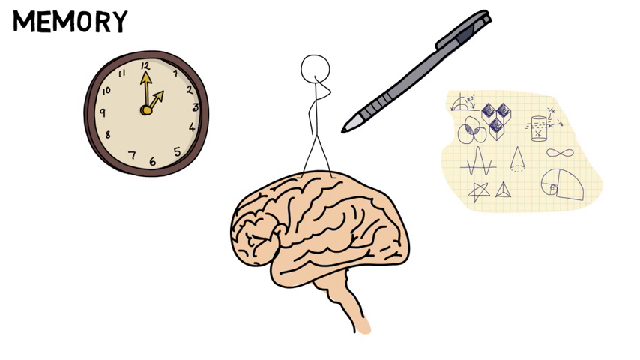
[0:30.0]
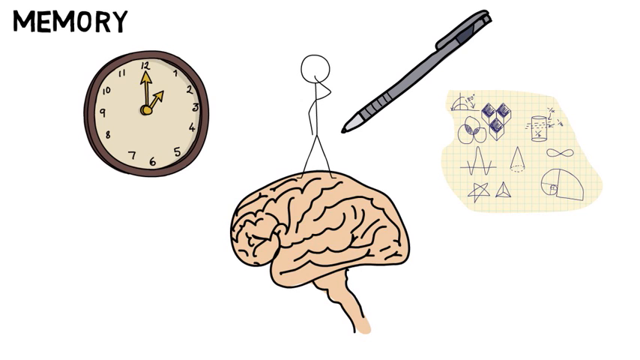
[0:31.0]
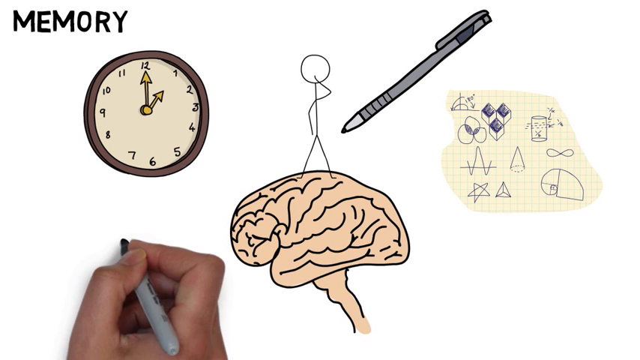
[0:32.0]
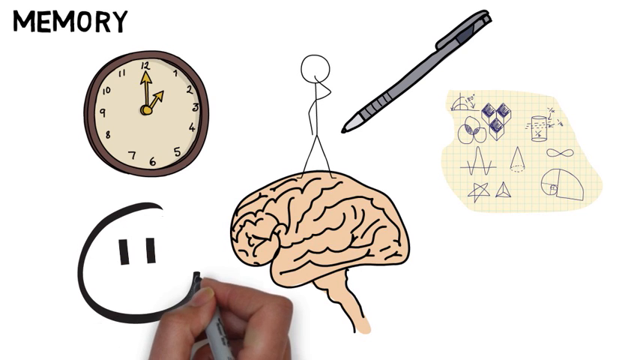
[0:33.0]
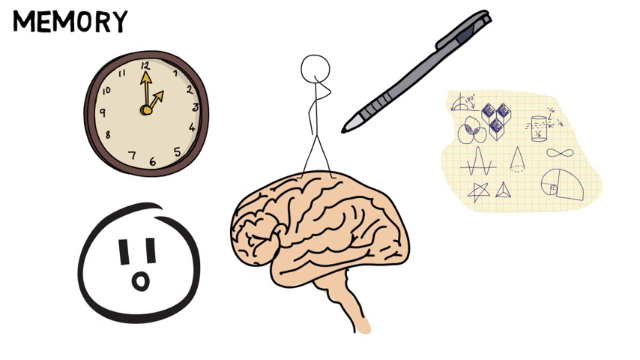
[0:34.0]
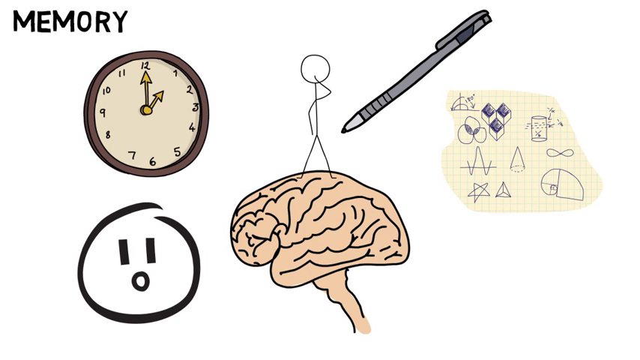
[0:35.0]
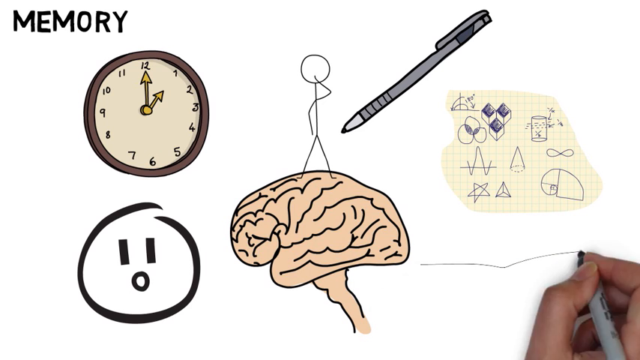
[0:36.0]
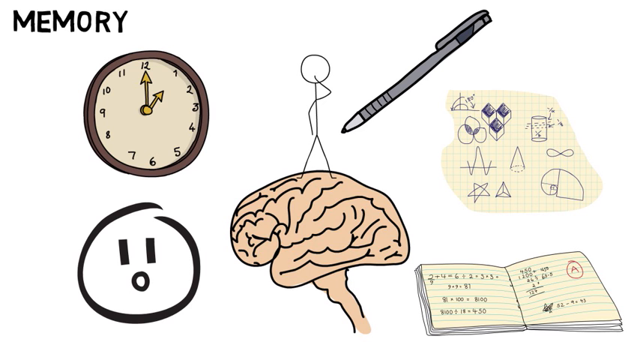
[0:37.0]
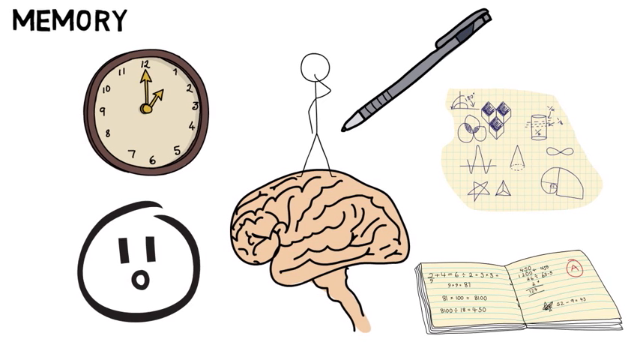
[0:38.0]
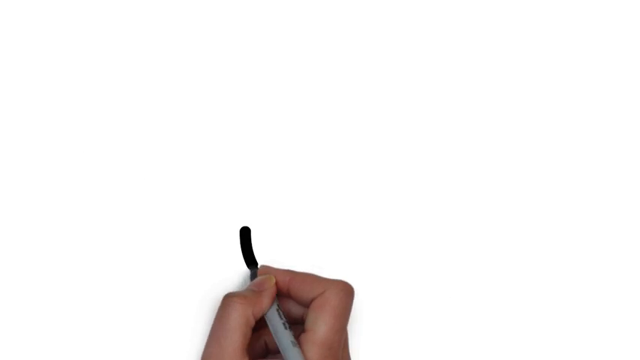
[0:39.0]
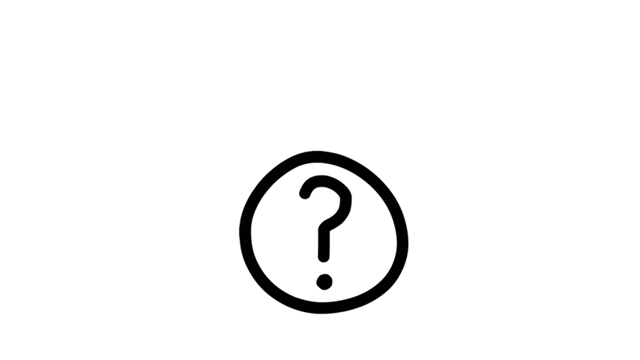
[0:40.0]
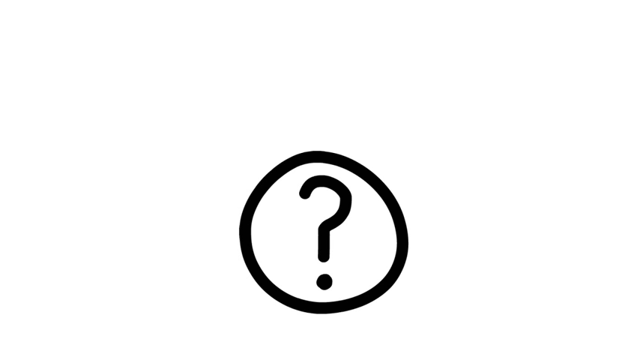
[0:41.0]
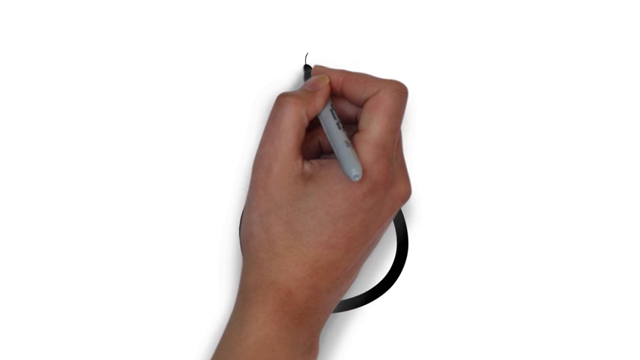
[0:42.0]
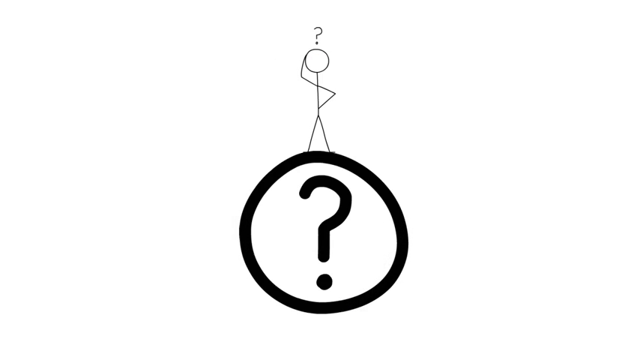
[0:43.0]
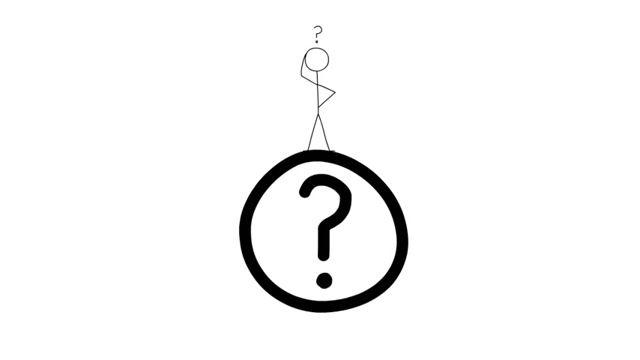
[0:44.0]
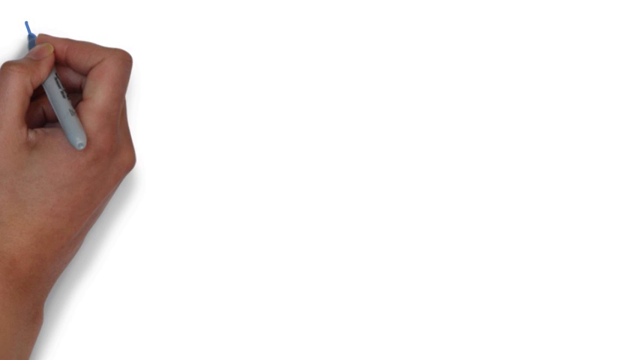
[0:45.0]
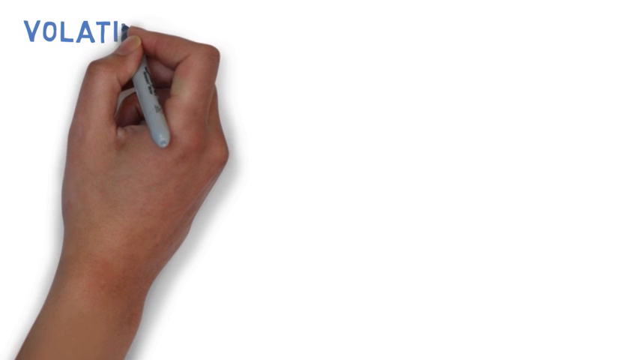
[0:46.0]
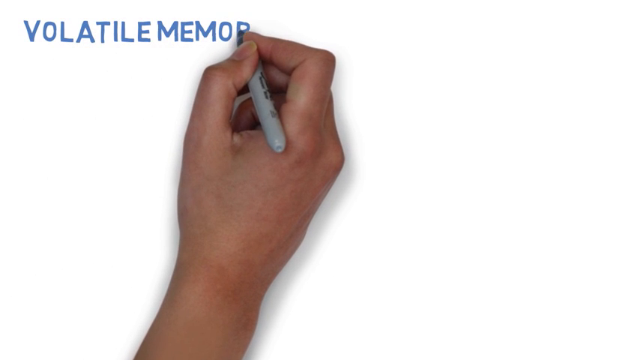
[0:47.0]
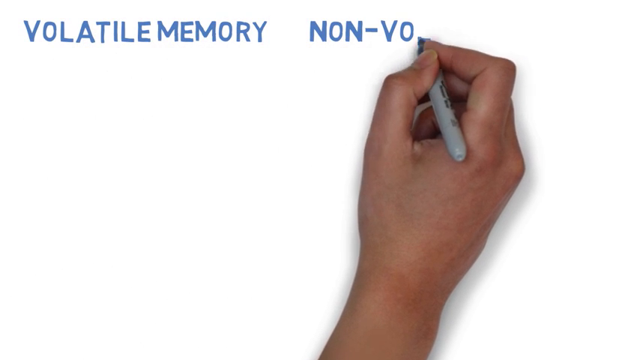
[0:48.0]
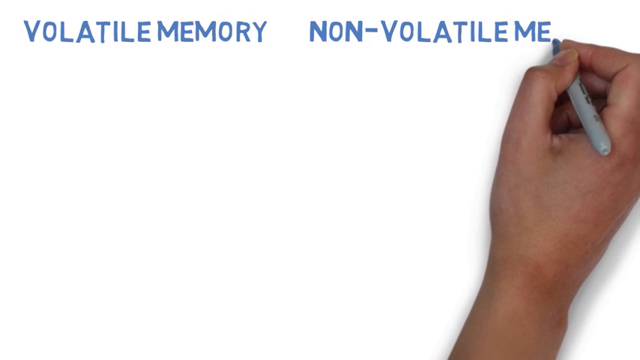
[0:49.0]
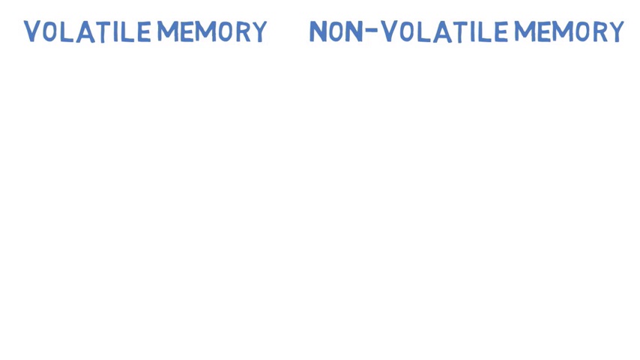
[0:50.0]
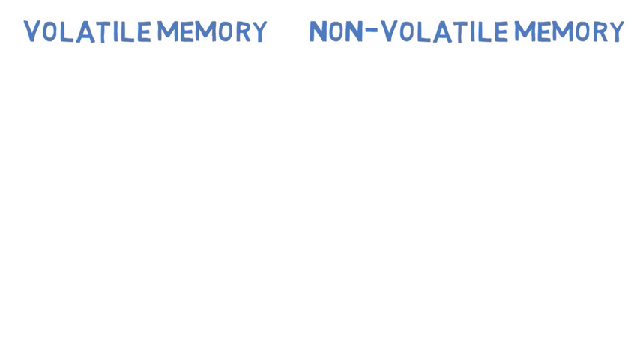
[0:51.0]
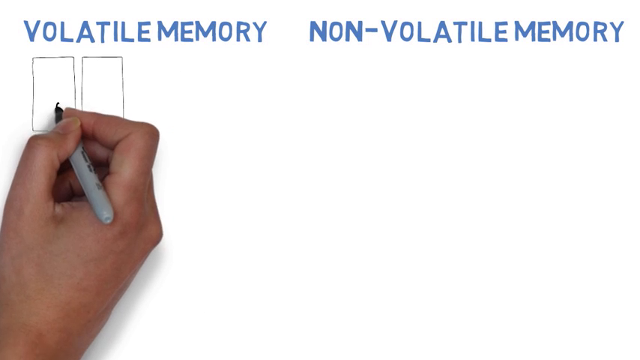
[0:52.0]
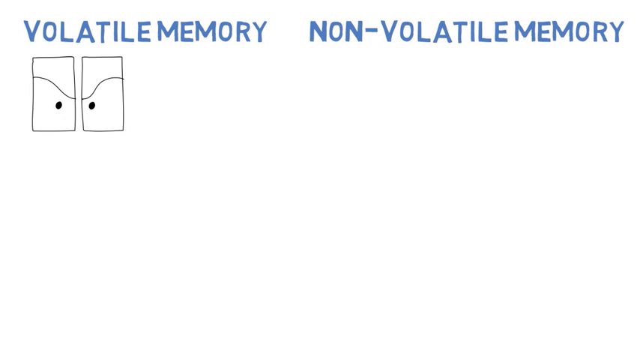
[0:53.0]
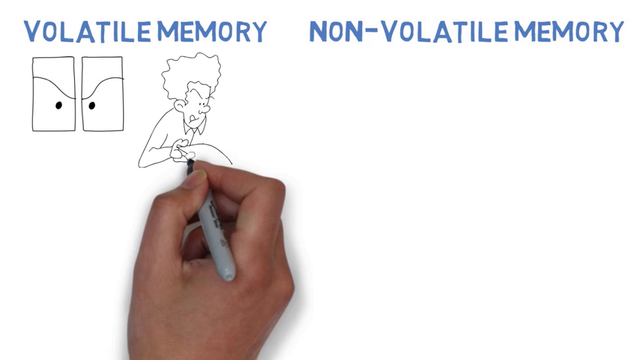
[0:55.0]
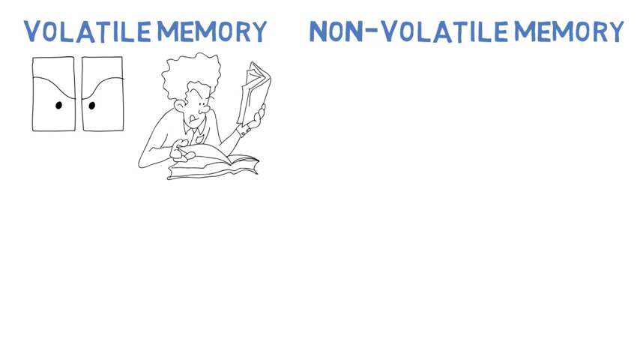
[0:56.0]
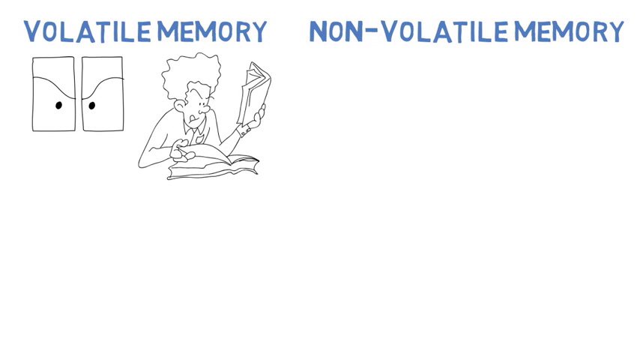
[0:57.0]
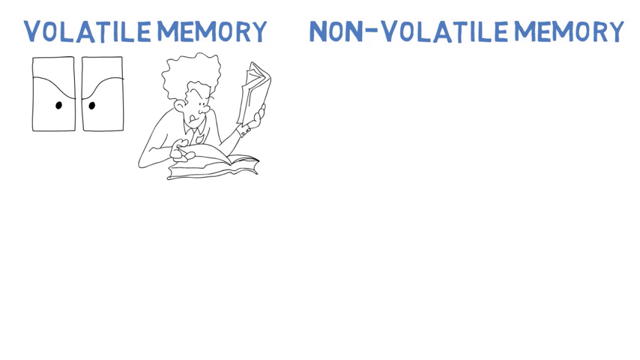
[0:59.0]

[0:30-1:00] The hand continues drawing with a dark black pen. It draws a circle containing two little straight lines and a zero, then a book in the bottom right corner with what looks like math inside. The drawings move from the bottom to the upper side, and the hand draws another circle with a question mark inside and a wire person on top of it. The hand then writes two words: "volatile memory" in the upper left corner and "non-volatile memory" in the upper right corner. Beneath "volatile memory" there are drawings, including two rectangles that look like doors. There is also a cartoon drawing of a person with one hand lifting a book and the other hand opening a book that is down.